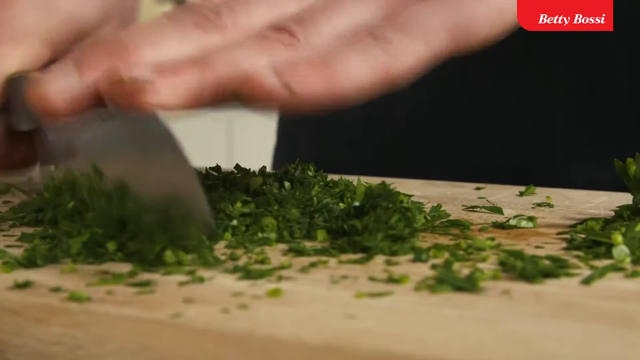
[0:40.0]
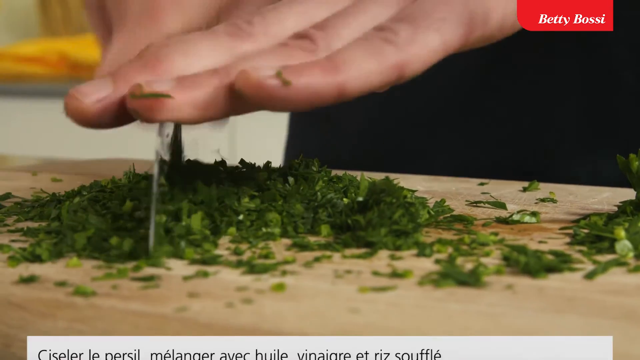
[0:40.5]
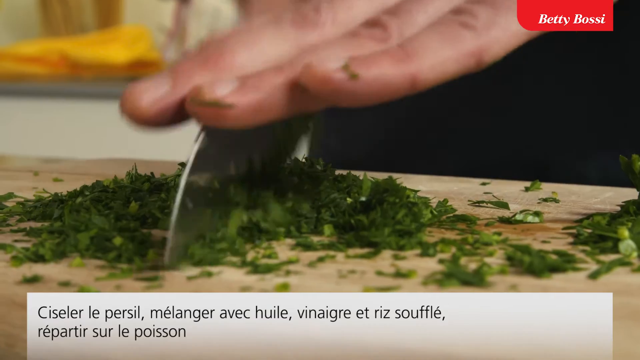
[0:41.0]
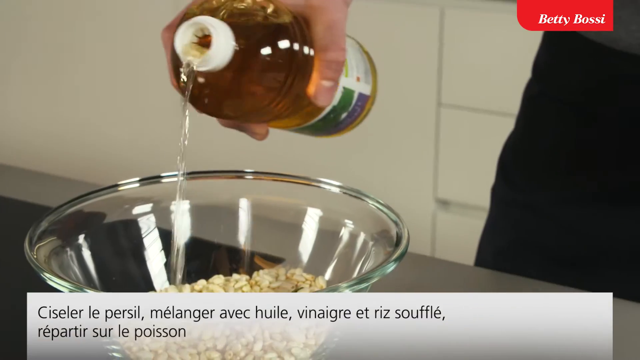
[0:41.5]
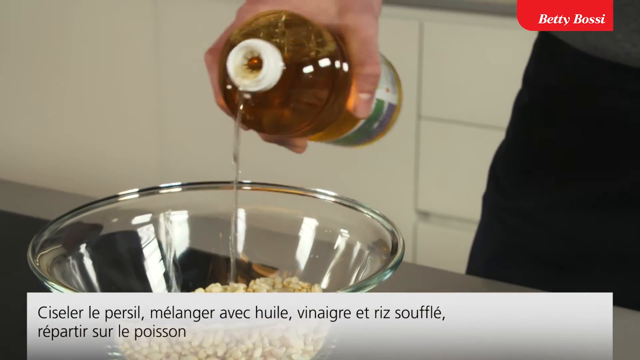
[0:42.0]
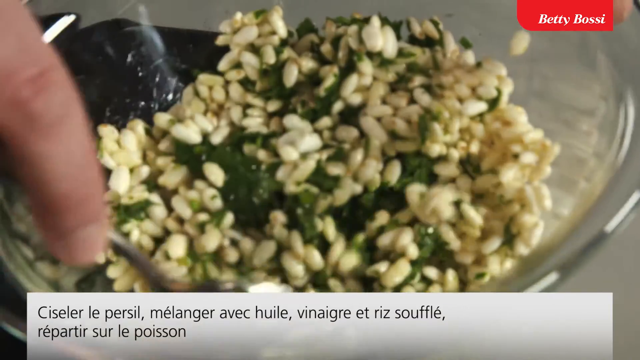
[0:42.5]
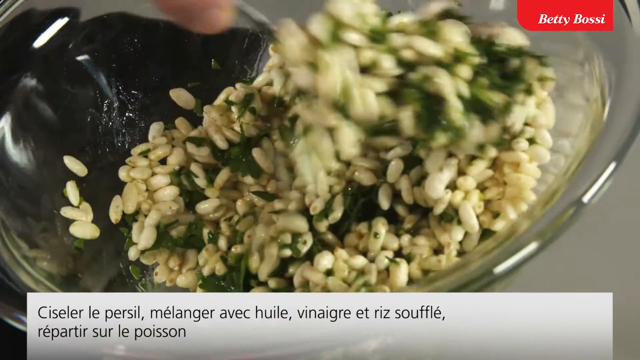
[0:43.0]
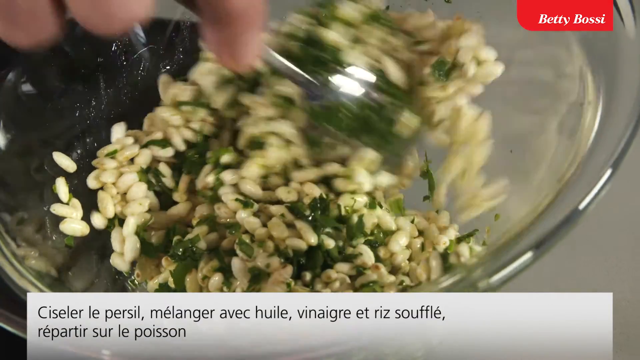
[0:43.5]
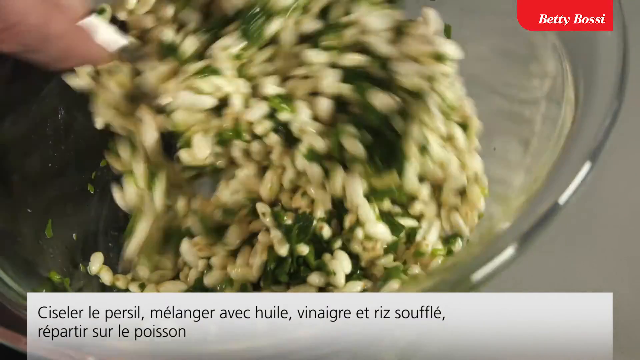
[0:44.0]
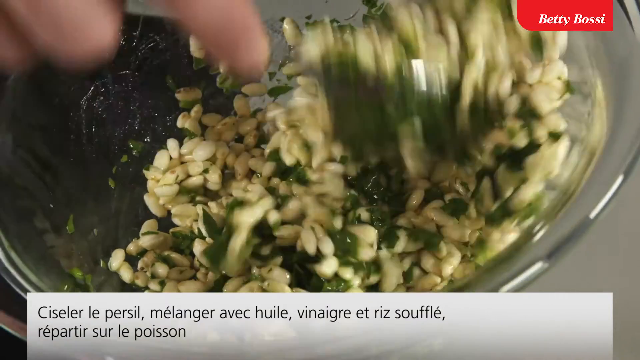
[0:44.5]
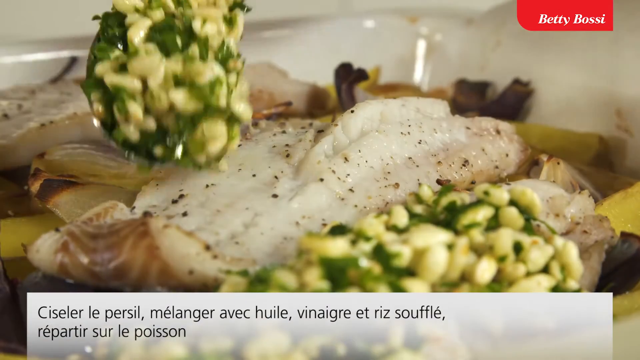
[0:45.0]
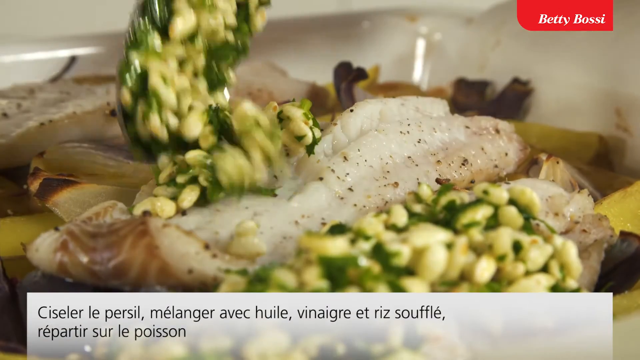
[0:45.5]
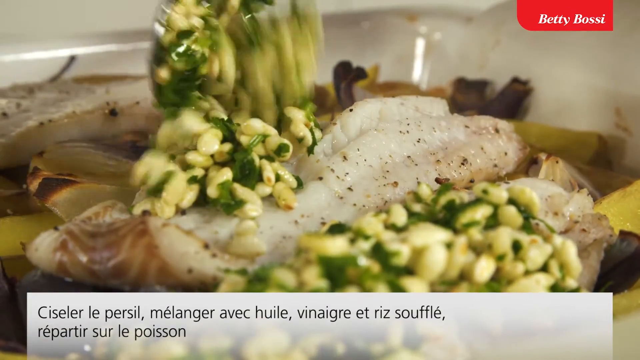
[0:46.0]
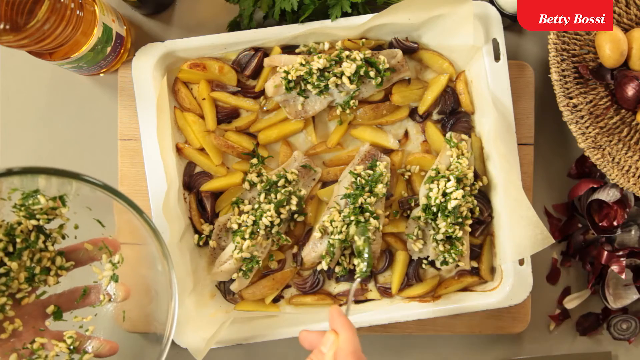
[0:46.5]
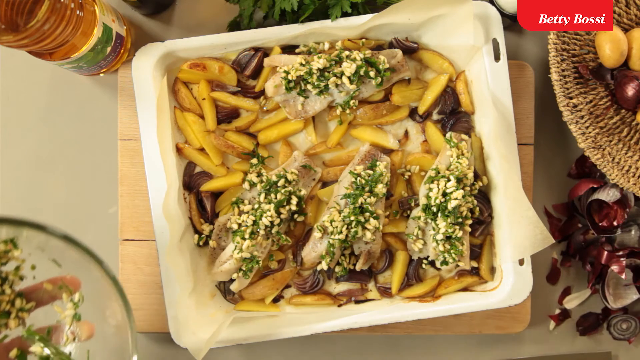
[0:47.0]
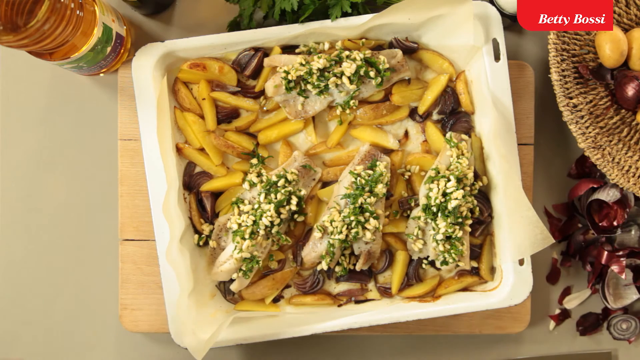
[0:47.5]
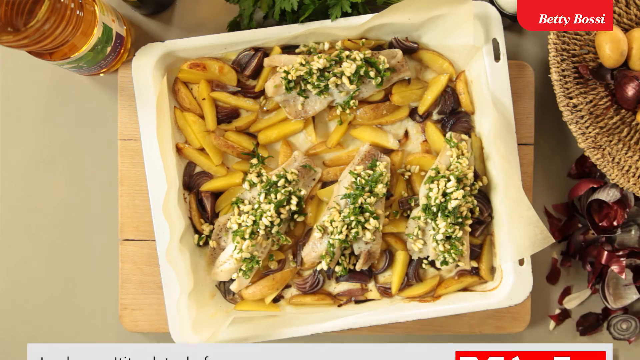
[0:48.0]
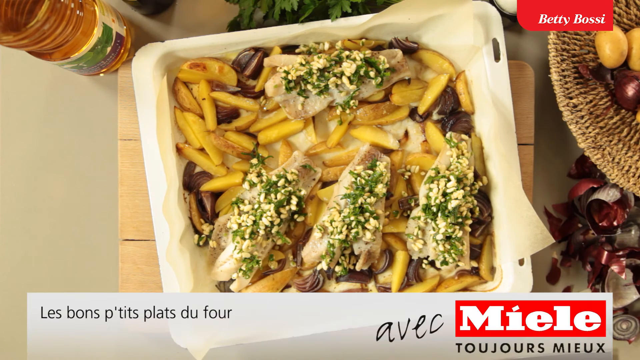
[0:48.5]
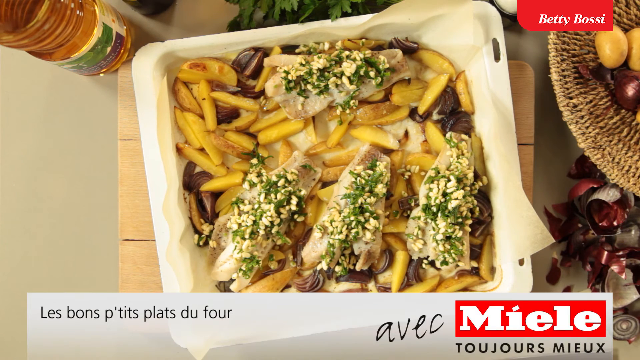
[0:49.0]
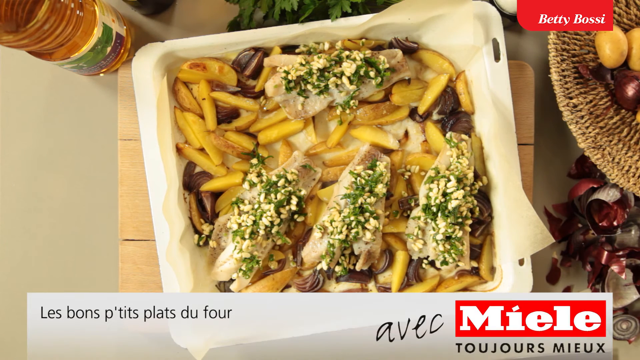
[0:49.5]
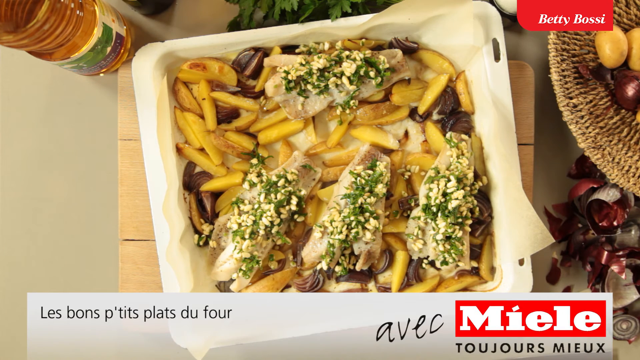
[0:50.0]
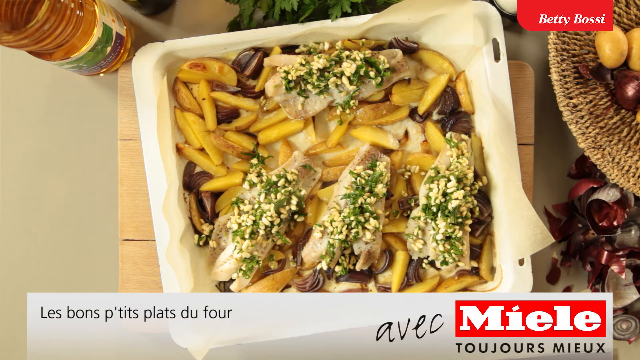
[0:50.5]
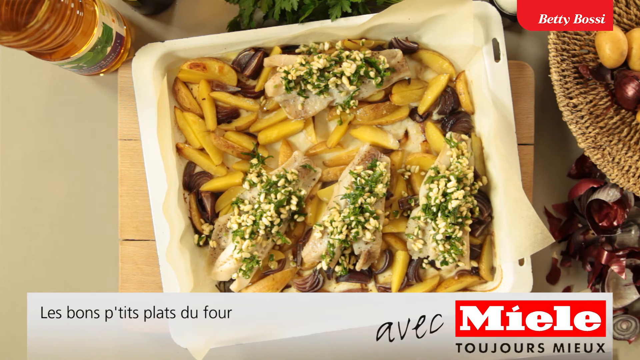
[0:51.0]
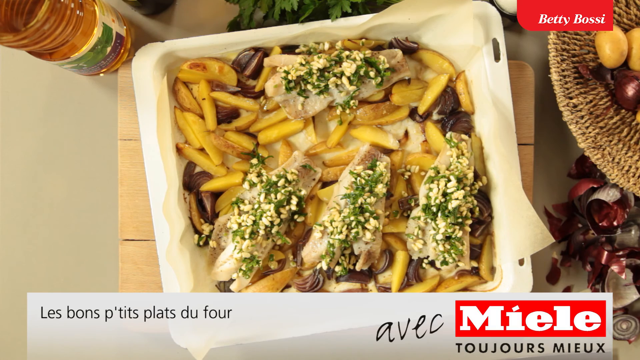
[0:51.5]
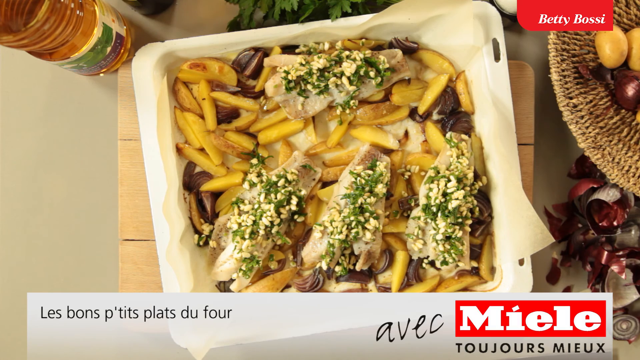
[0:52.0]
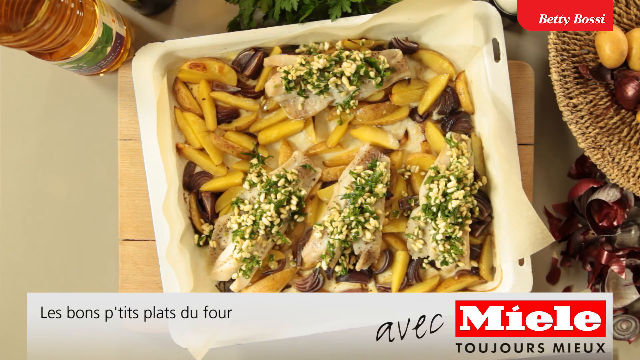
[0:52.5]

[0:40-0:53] A person's hands briskly chop green leafy vegetables with a sharp knife on a wooden cutting board. Next, a glass bowl holds what looks like grains, and the person's hand pours oil from a bottle onto the ingredients in the bowl. The person tosses the grains, which look pre-cooked, with the freshly chopped green vegetables, mixes thoroughly, and spoons some of the mixture onto the prepared dish of fish and potatoes. A top view then shows the finished meal: golden, crisp oven-baked potatoes garnished with wedges of onion also cooked in the oven, and on top, four oven-baked fish fillets with the spooned mixture of chopped green vegetables and grains. The video ends with this view.